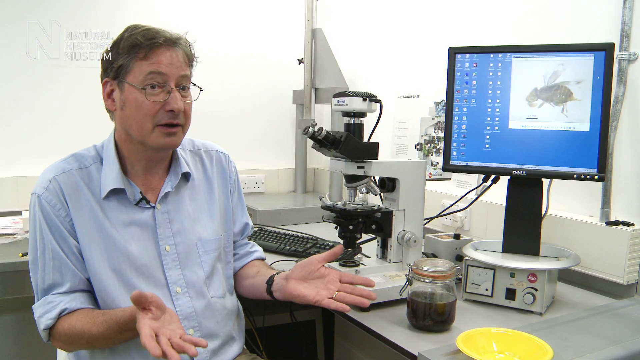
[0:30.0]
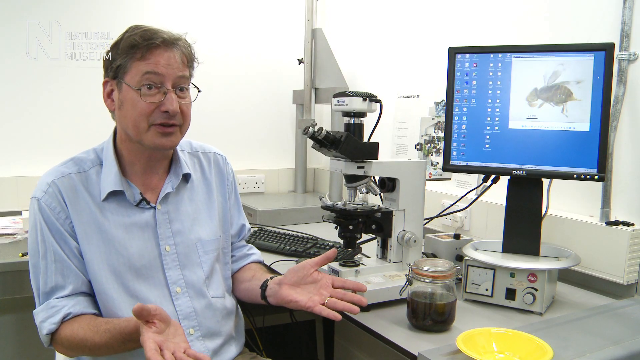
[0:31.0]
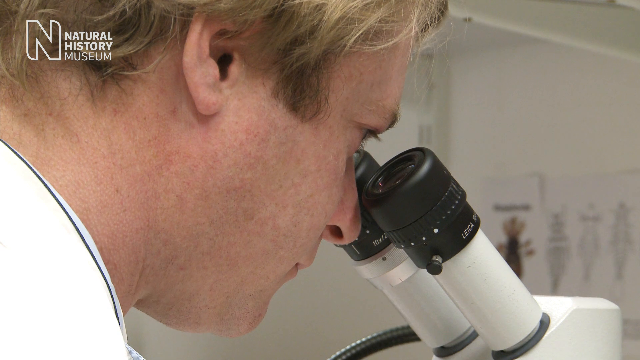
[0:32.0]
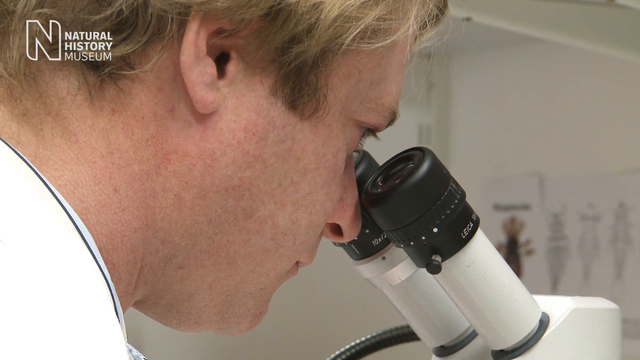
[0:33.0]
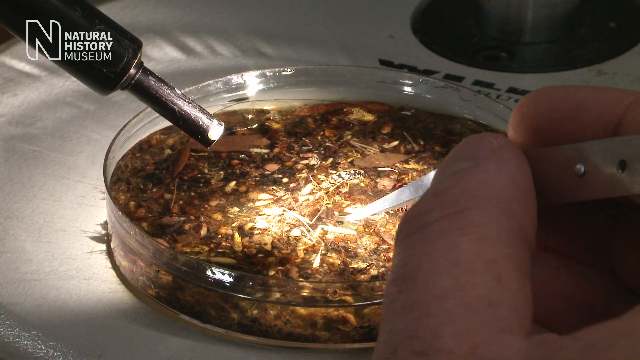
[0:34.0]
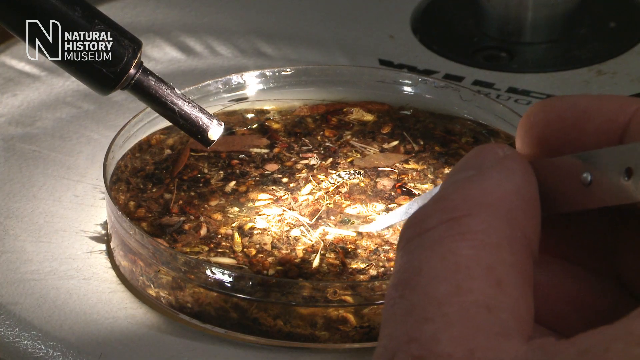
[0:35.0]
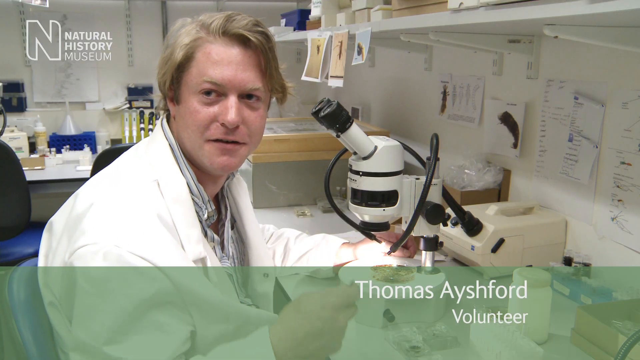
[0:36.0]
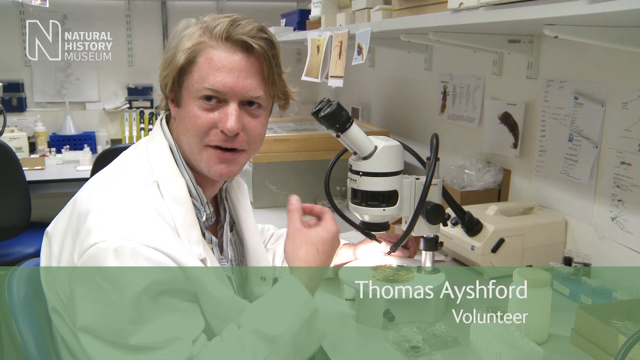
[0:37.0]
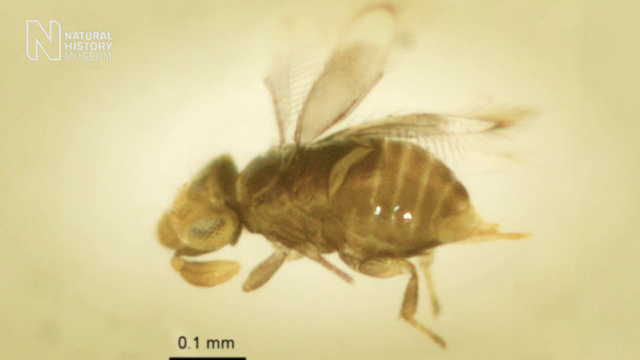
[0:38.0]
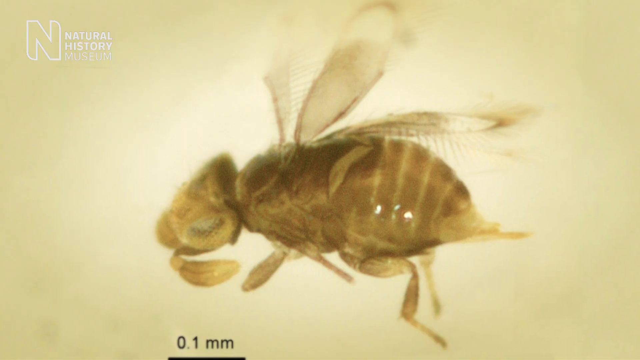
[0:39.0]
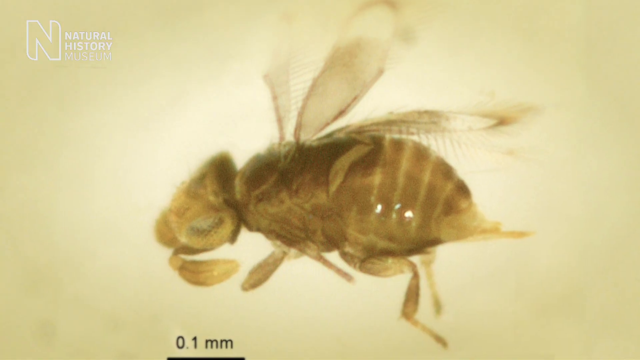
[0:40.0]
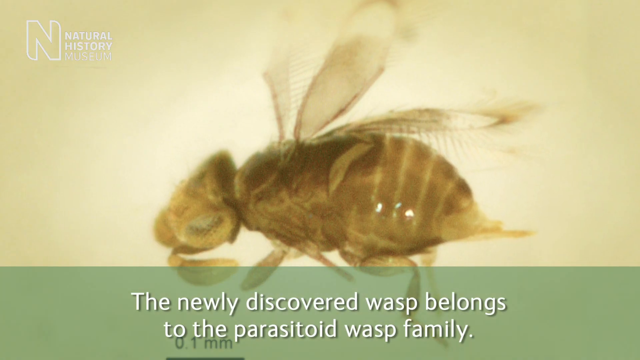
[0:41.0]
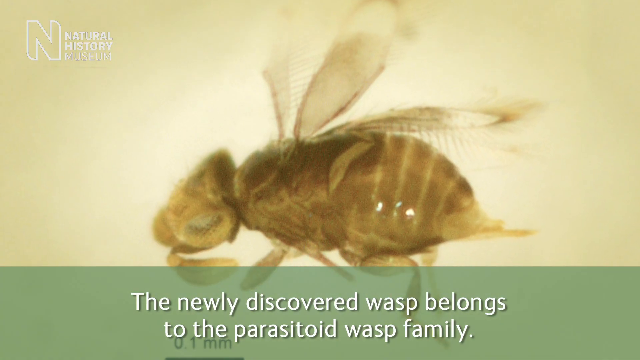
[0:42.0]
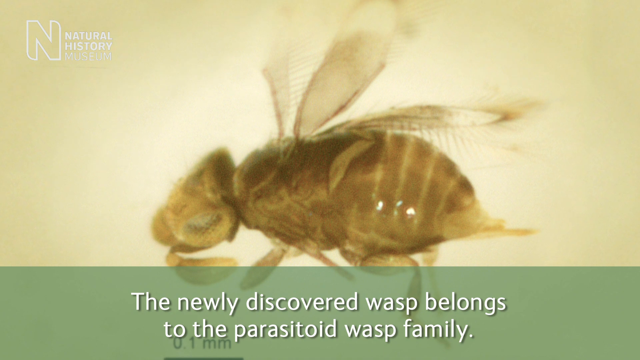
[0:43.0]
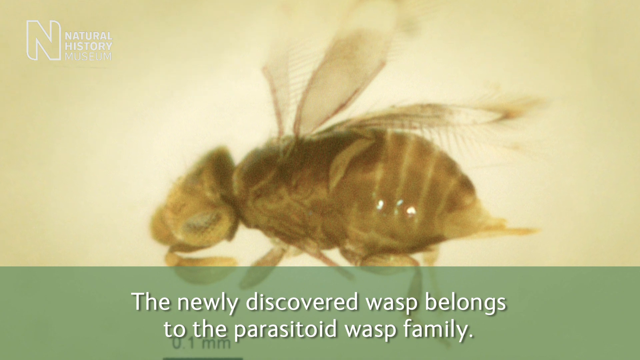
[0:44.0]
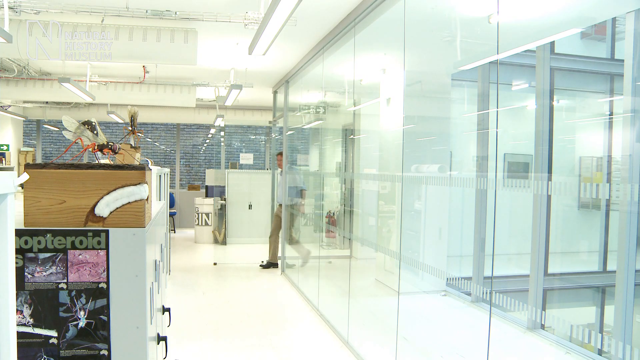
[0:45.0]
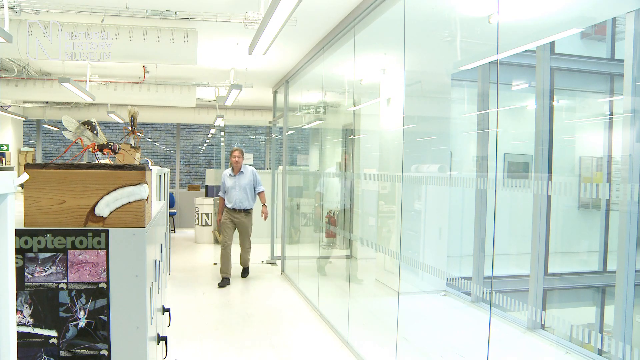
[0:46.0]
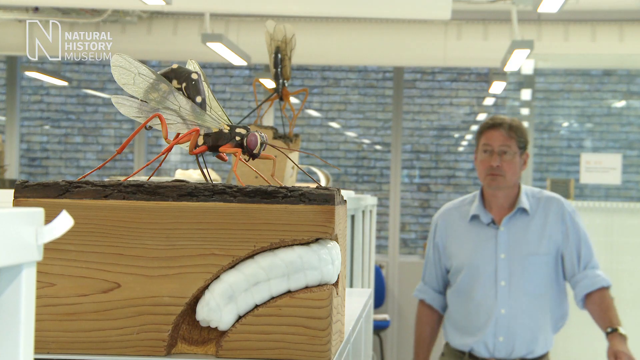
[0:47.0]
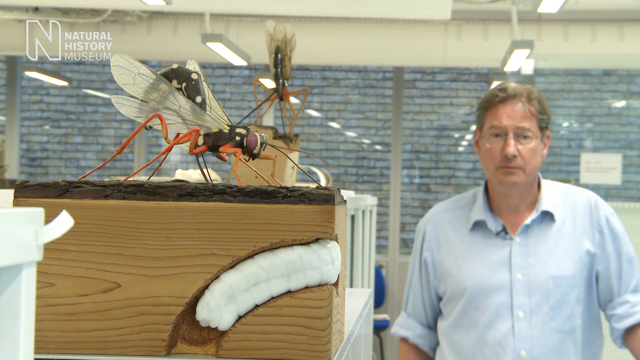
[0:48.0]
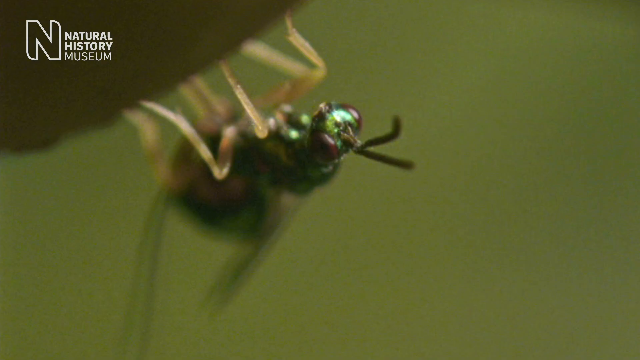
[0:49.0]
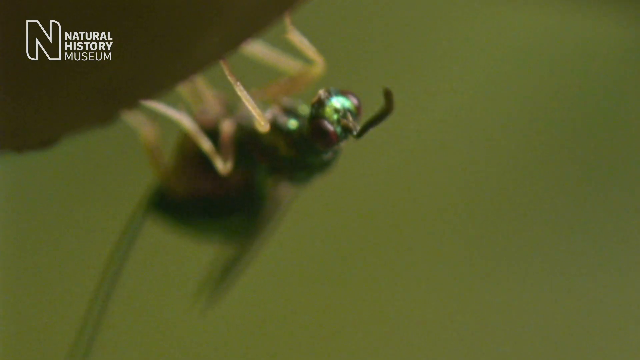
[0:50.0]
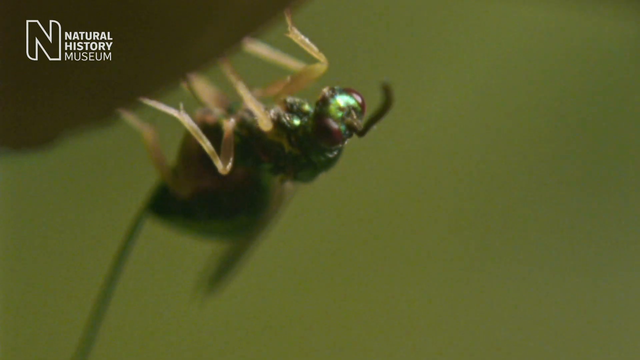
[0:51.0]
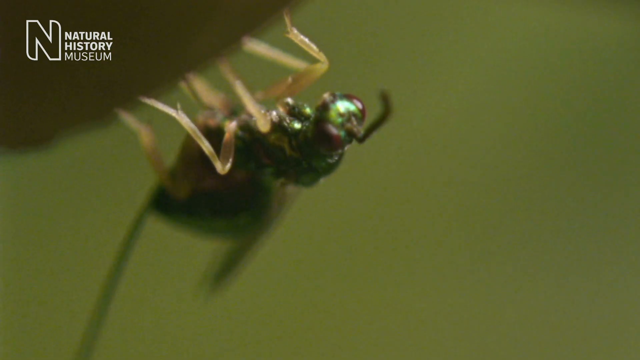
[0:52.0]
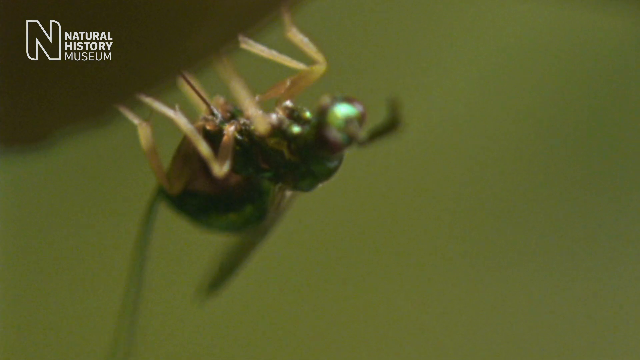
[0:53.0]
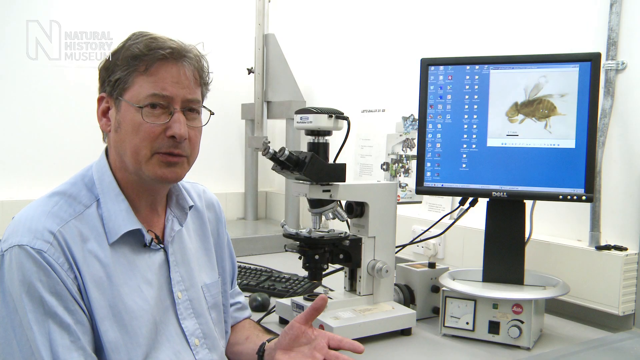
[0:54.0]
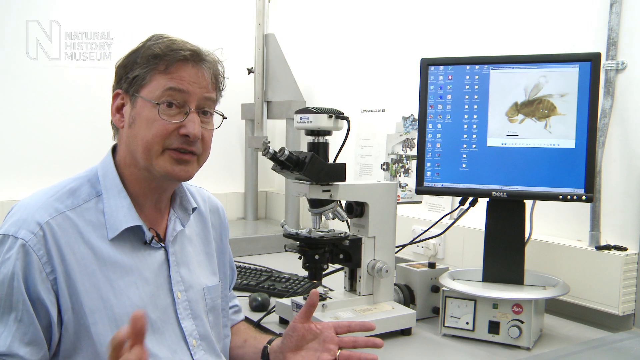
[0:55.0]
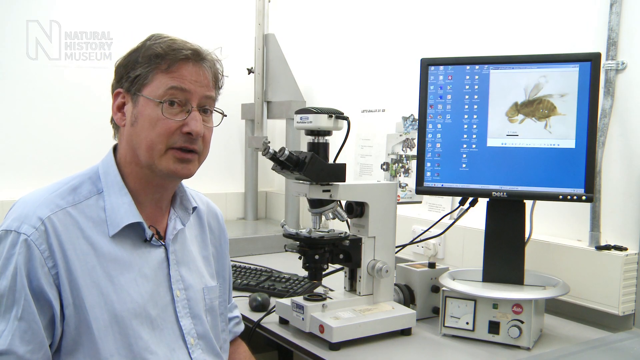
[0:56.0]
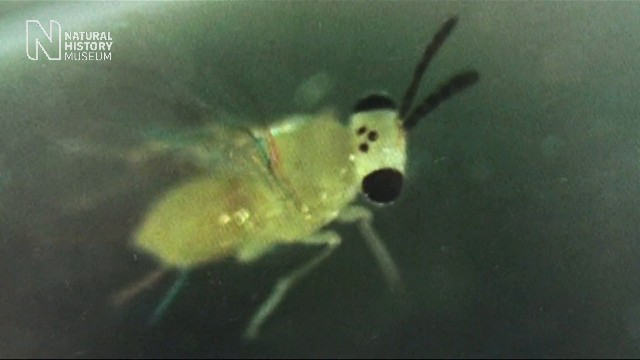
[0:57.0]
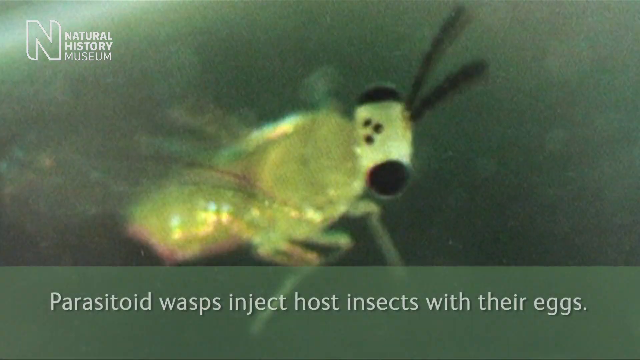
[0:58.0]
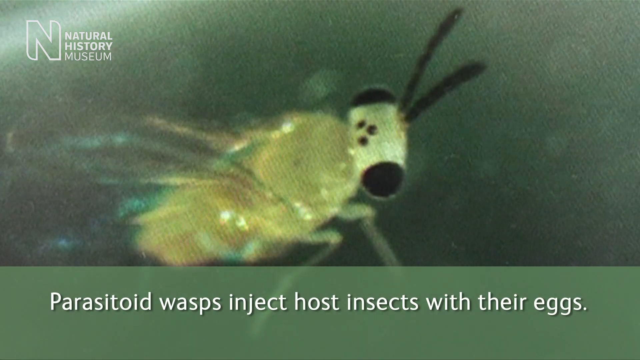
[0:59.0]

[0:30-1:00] Dr. Pulaski speaks to somebody on the right-hand side of the camera, using his hands in explanatory gestures, especially his visible left hand. A computer screen is beside him, elevated, with a picture of a wasp next to it. The video cuts to a gentleman with blonde hair and the edge of a white coat looking intently through a microscope, and then to what he is looking at: a light source on the left-hand side pointing directly at a petri dish of brown material with water, and his fingers on the right-hand side poking at different things in the water, which is quite thick with different artifacts, pieces of sediment or plant material. His name comes up on screen as Thomas Ashford, a volunteer, as he looks away from his microscope towards somebody slightly to the left of the camera. He points up with his right hand, maybe to some pictures just above the microscope with its light source and camera. The video then shows a close-up of the wasp, which has slightly bee-like stripes, wings (at least three visible), at least four visible legs and possibly more, a tail and a proboscis pointing to the left. Text identifies it as a newly discovered wasp belonging to a particular family. The view goes slightly more close up. Then, apparently, Dr. Polatsky appears in the distance walking through a very modern lab with glass walls on one side and at the back, and he walks down a corridor directly towards the camera. He wears brown trousers and a blue shirt. The camera zooms in closer as he moves past quite a large model of some sort of insect on top of a cupboard on the left-hand side; he looks in at the insect as he comes by. He looks quite serious, walks slowly and goes towards the right-hand side of the camera. The video then shows what is perhaps the wasp, seen from underneath at roughly a 135-degree angle with its head pointing to the top right and its proboscis there. It has a green-looking head and maybe a green-looking body, and it moves around, its legs moving. The video returns to Dr. Polatsky in the same setup as before, talking to a person on the right-hand side of the camera, with a microscope in front of him linked to a computer showing a picture of the wasp. A close-up of the insect follows: it moves its wings and appears to move its legs ever so slightly as it goes up and down, and it is brightly lit so that it is almost transparent.